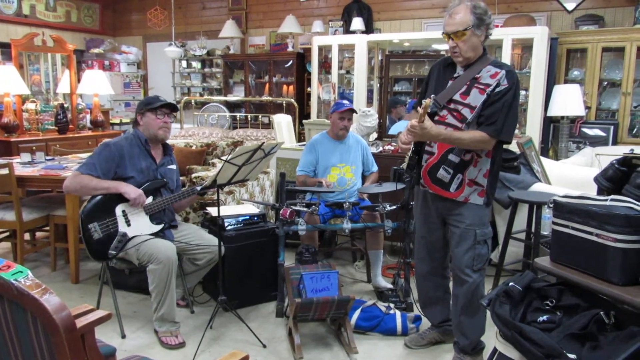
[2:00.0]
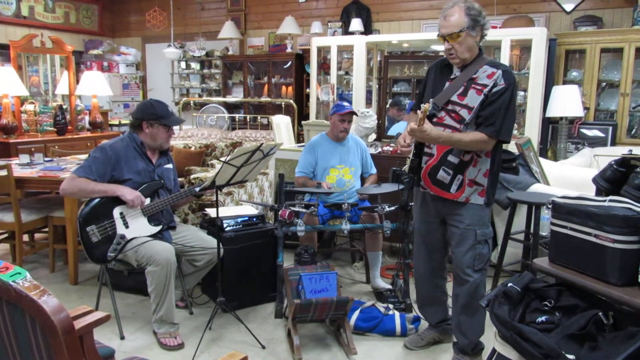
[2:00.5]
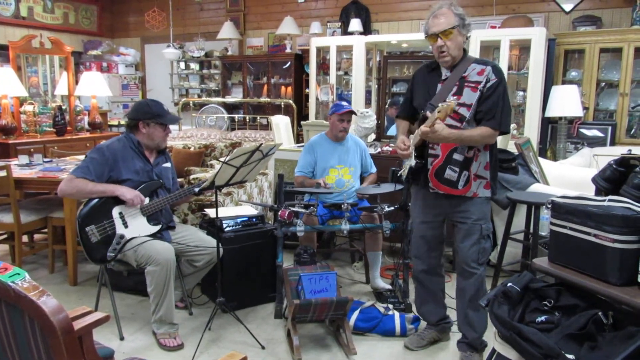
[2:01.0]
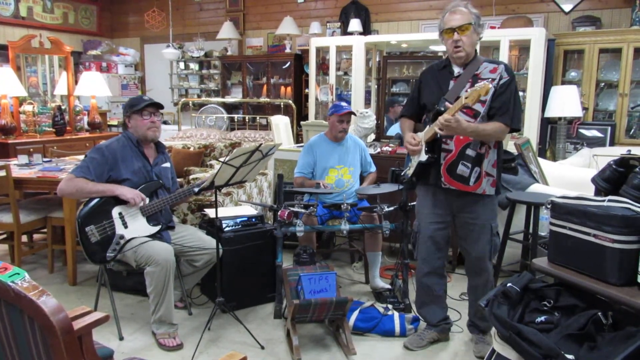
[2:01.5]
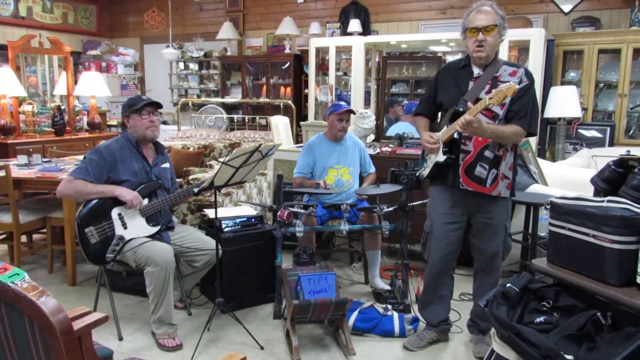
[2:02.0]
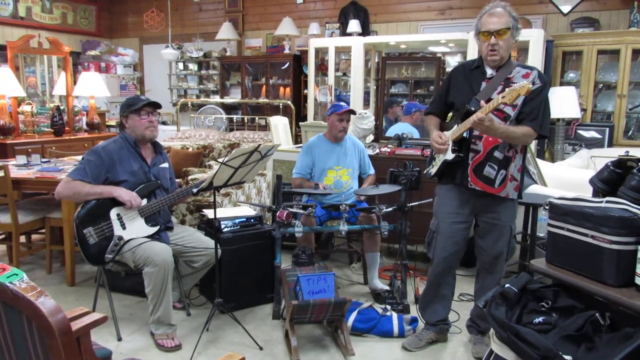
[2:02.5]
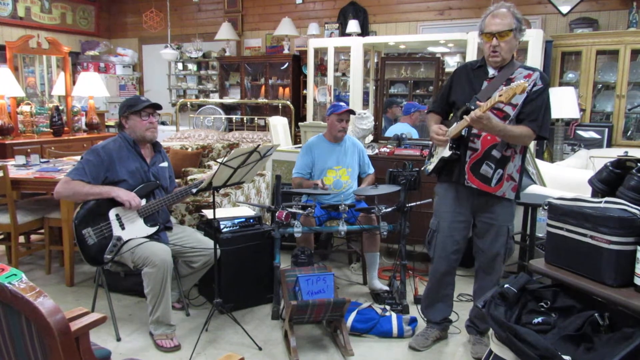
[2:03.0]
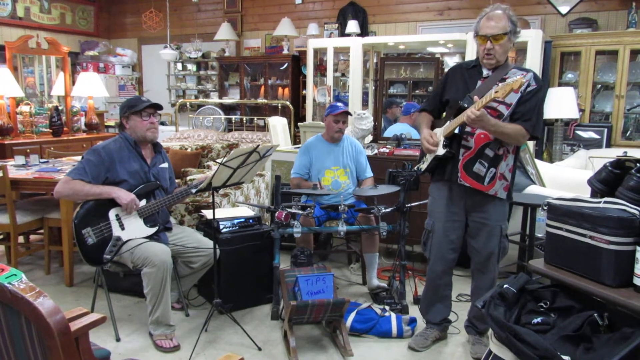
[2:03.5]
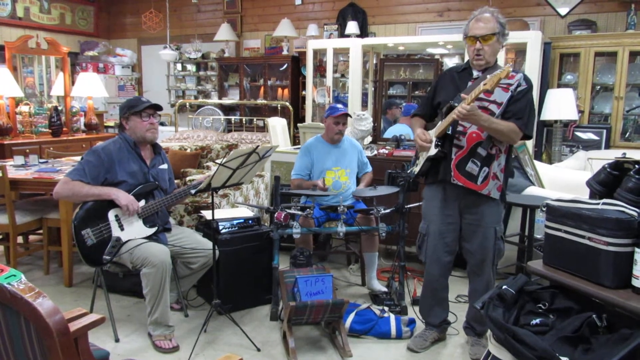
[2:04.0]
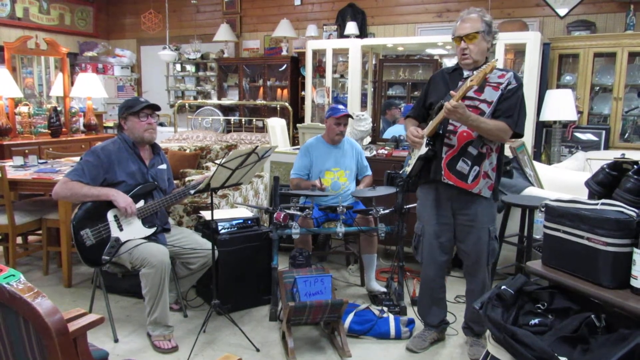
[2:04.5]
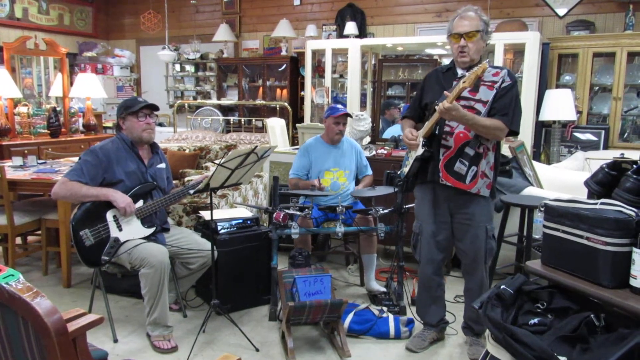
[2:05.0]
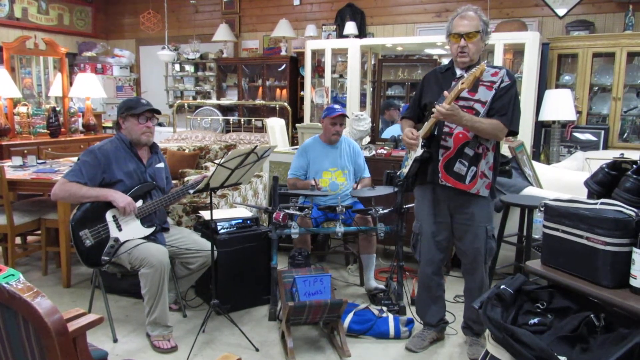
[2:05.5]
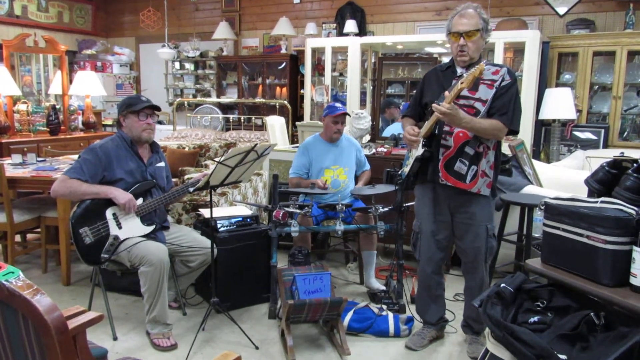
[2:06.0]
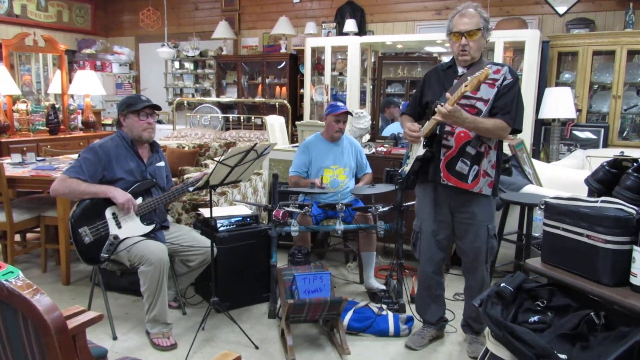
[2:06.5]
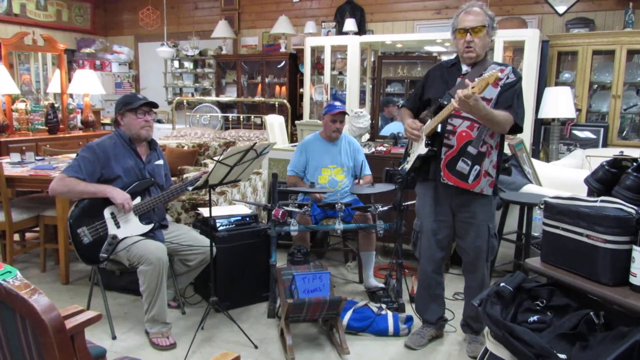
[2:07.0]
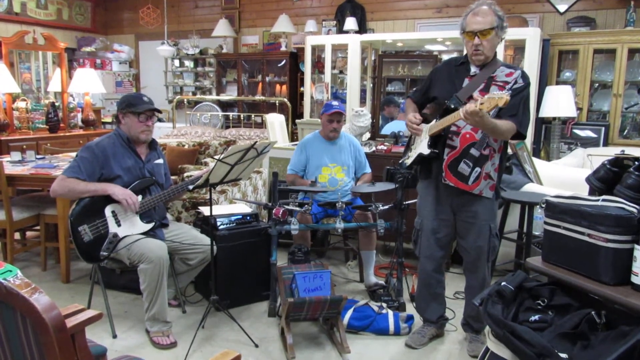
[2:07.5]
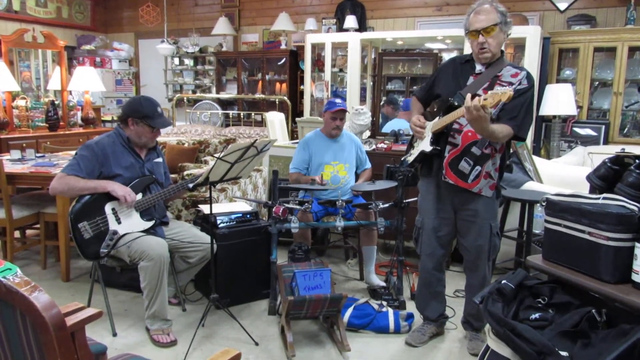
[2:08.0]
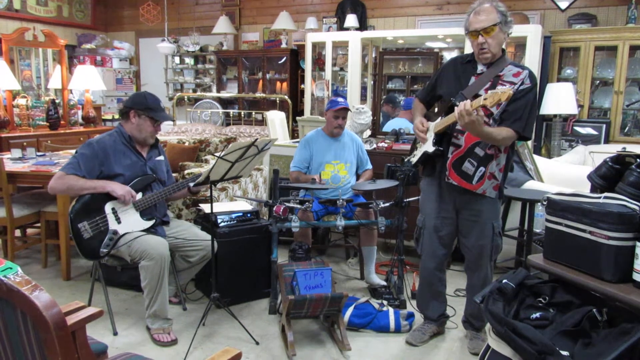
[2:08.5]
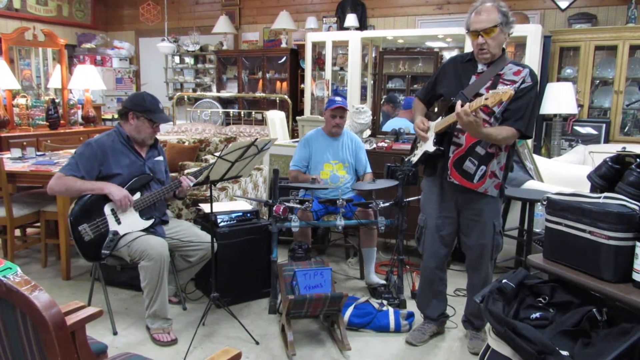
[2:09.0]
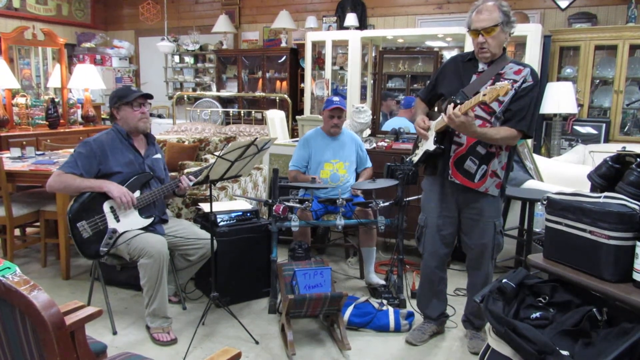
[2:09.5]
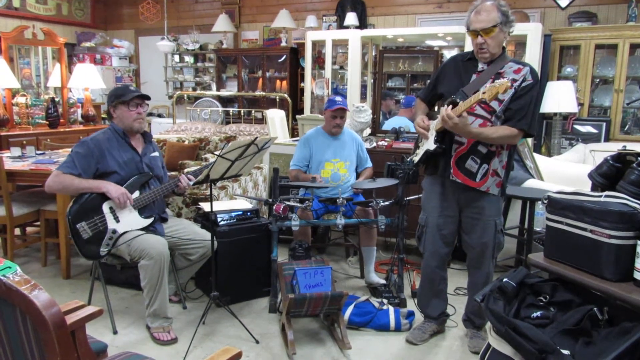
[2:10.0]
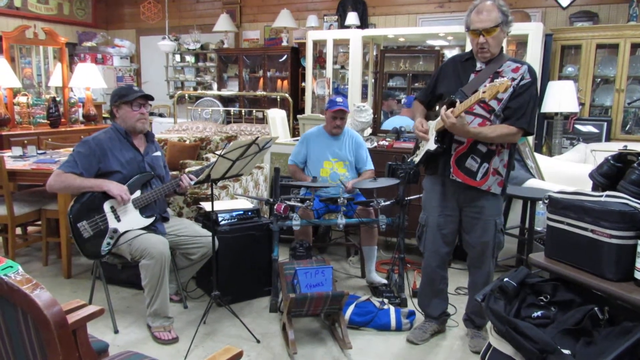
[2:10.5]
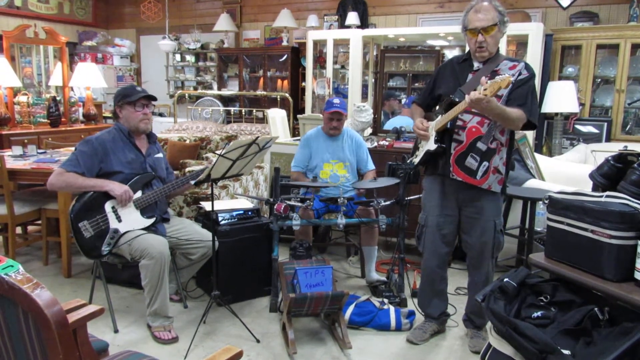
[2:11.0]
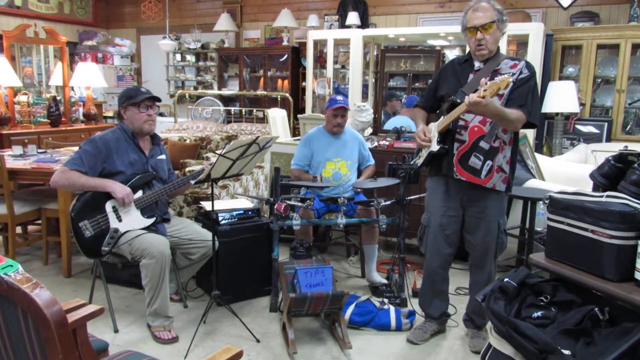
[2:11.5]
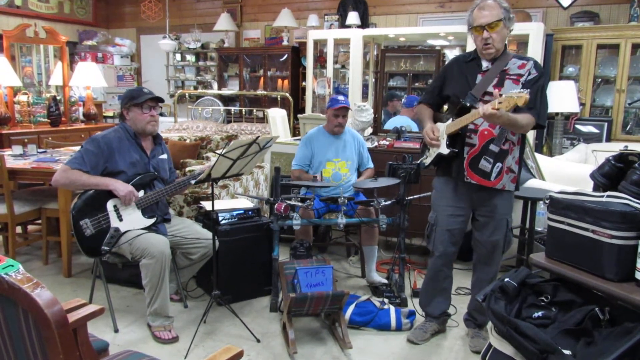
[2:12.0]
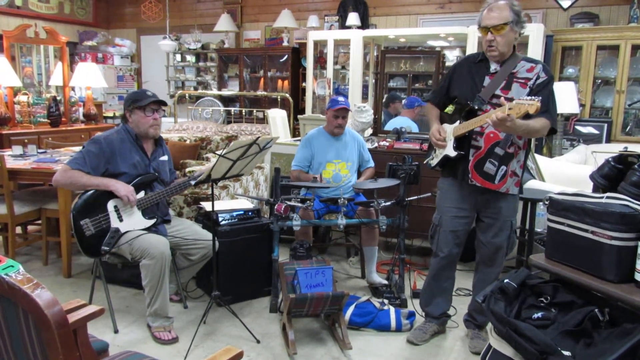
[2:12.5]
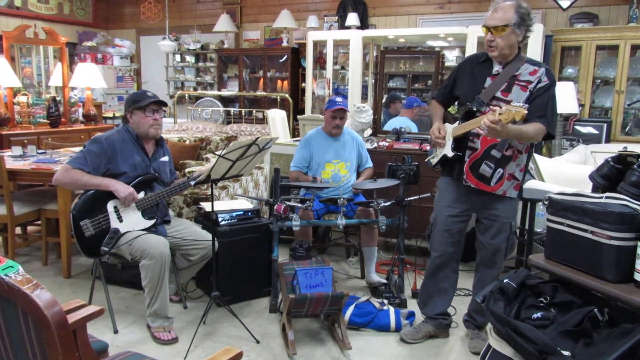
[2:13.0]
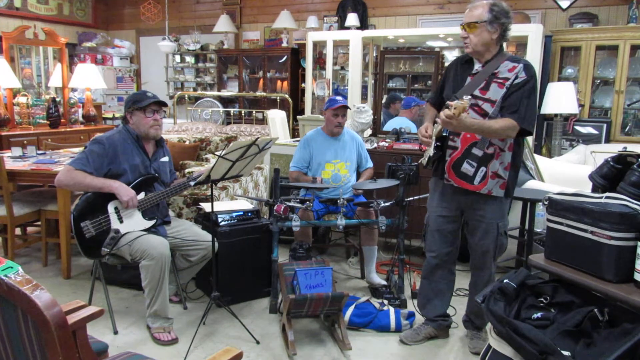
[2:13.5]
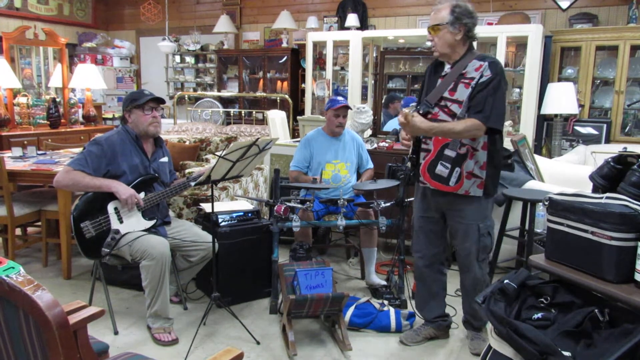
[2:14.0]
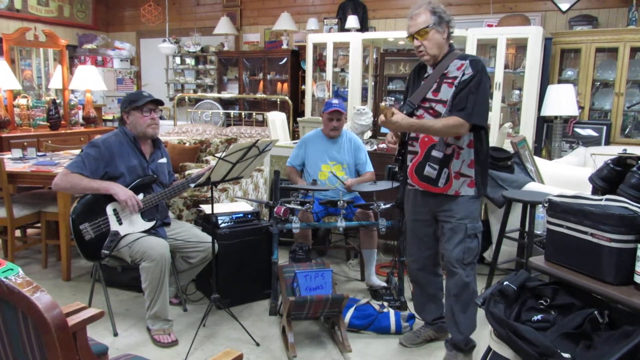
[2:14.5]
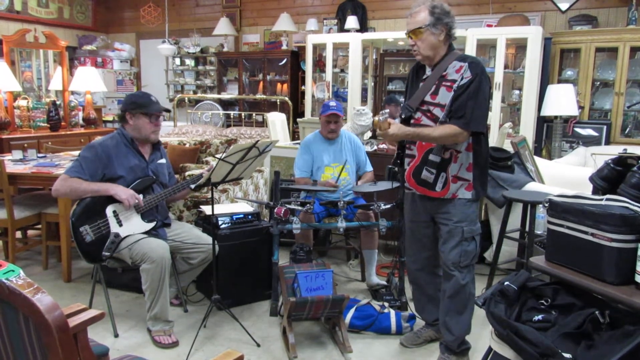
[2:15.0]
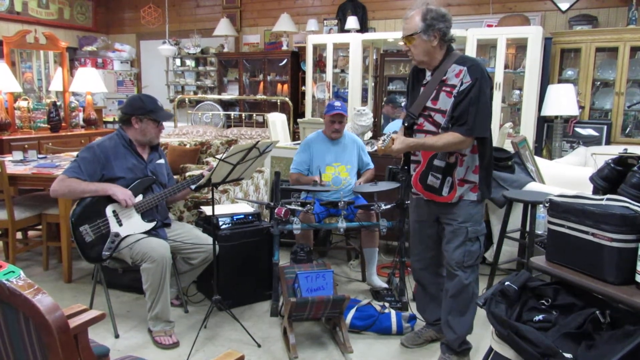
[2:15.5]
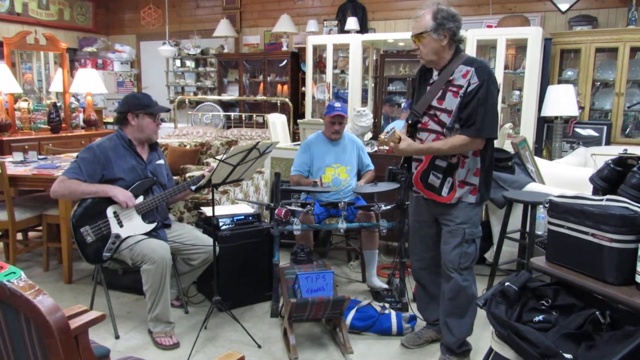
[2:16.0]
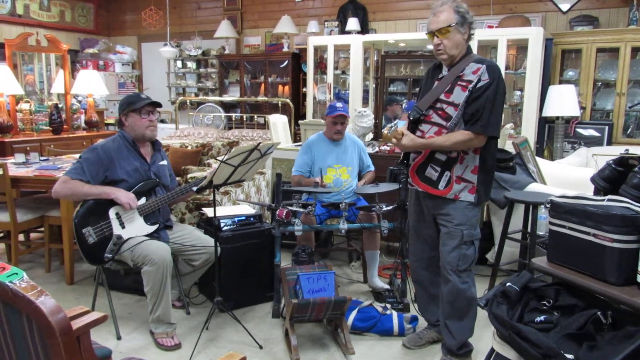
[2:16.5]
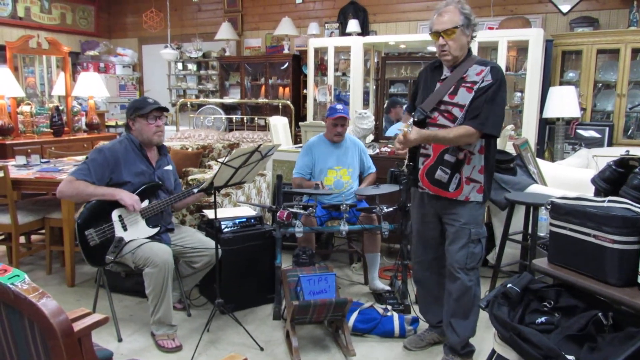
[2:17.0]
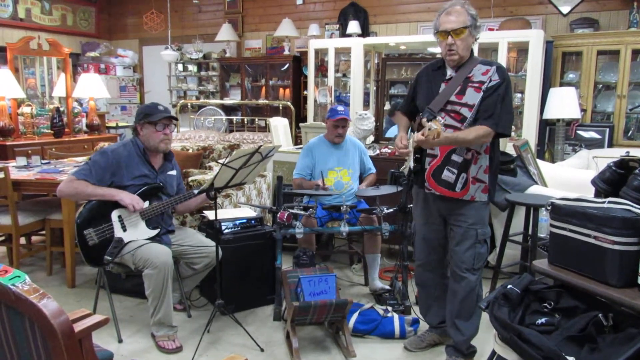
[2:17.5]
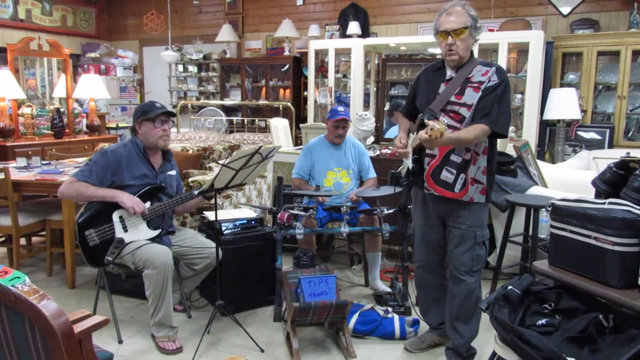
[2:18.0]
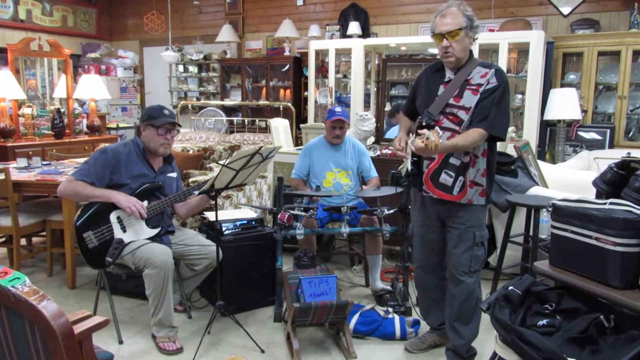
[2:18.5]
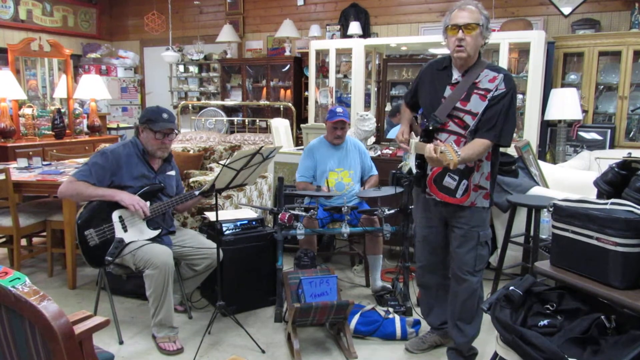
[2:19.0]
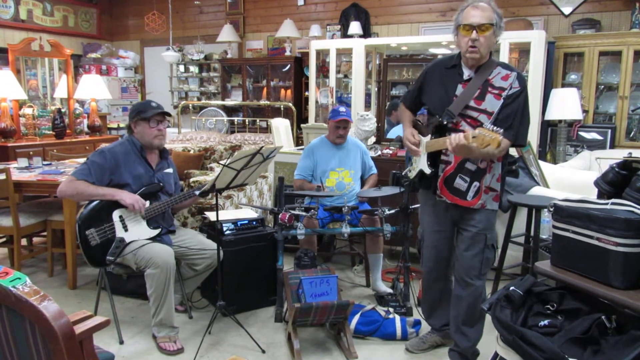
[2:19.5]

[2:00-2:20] The session continues. The bass player looks at his notes while playing; he is the only one with a teleprompter-like device to read notes from. The drummer is still casually drumming; he has a kind of grayish goatee and mustache. The pace has picked up. The lead guitarist talks to the bass player a little, but they do not pause, apparently guiding them. In the background are the brown dresser to the left, the white cabinet in the middle, and a tan cabinet to the right that might be a curio or Chinese dish cabinet, along with a darker brown cabinet to the left. There are lots of lamps, seven or eight, and brown, wooden-looking walls. There is lots of clutter, with the tan table covered in stuff. A fan is blowing in the background. Shoes are on top of what looks like luggage, and a blue and white tote bag of sorts is at the feet of the lead guitarist.